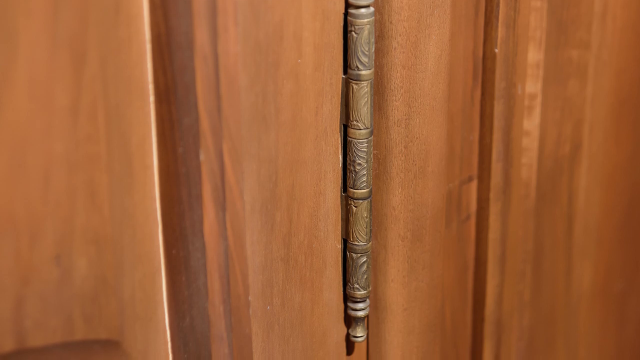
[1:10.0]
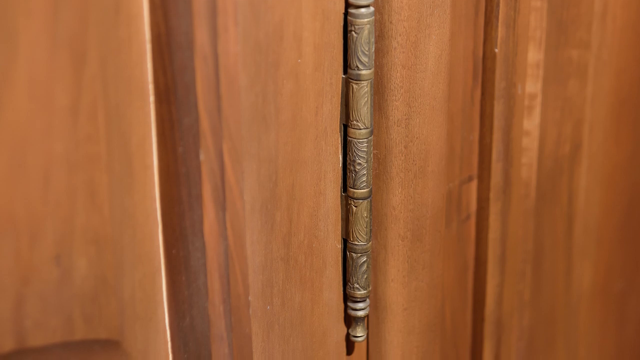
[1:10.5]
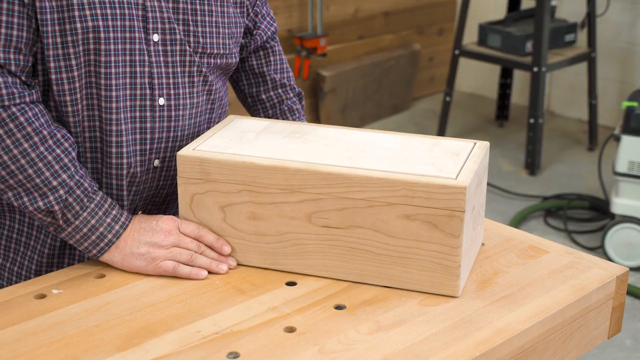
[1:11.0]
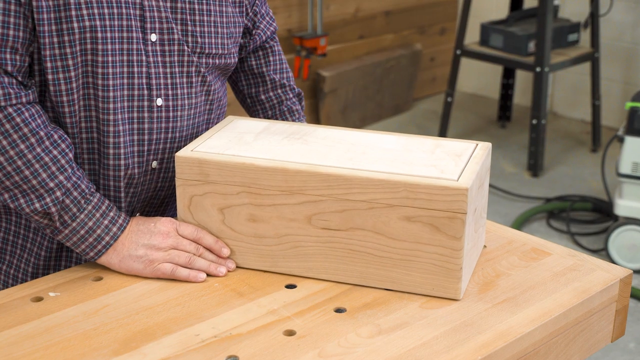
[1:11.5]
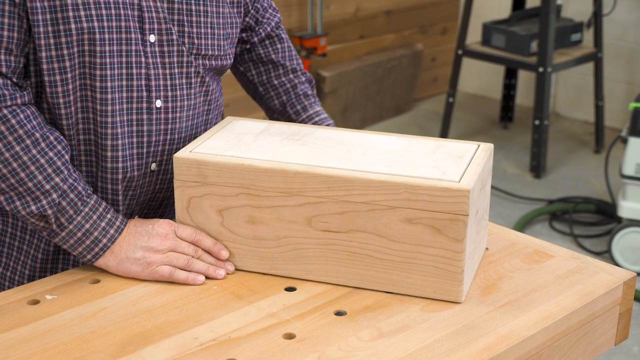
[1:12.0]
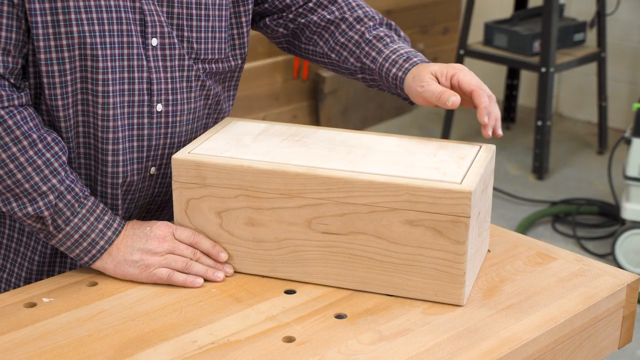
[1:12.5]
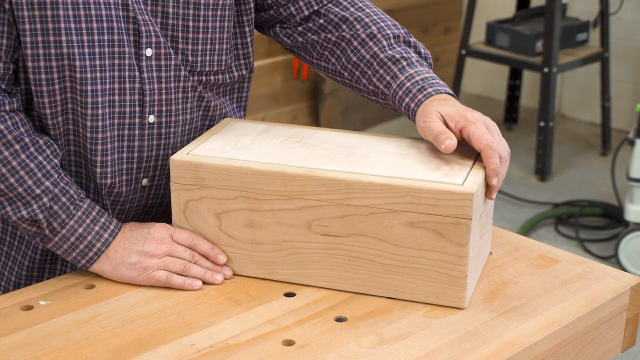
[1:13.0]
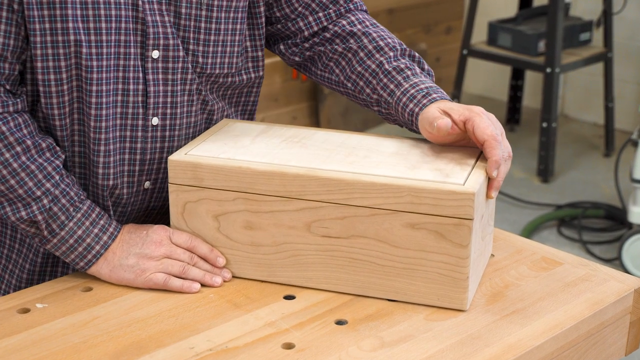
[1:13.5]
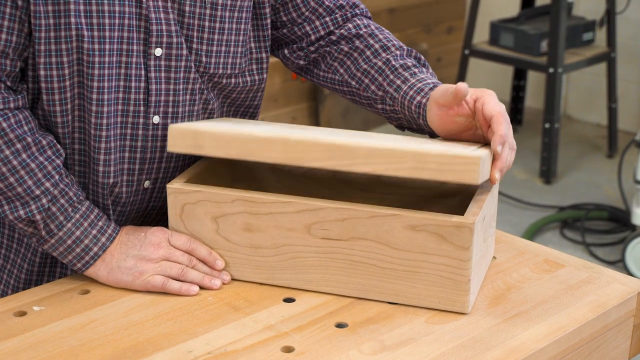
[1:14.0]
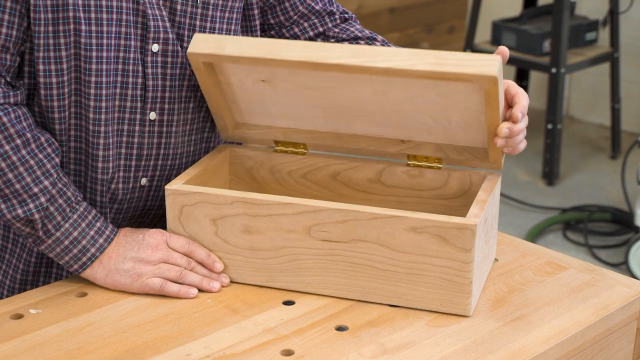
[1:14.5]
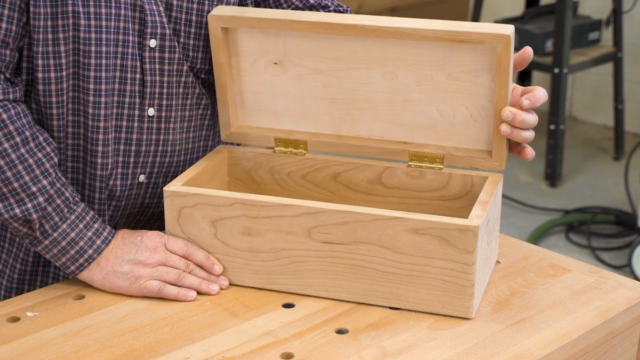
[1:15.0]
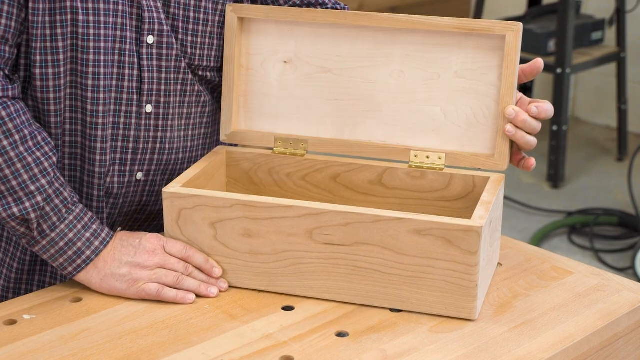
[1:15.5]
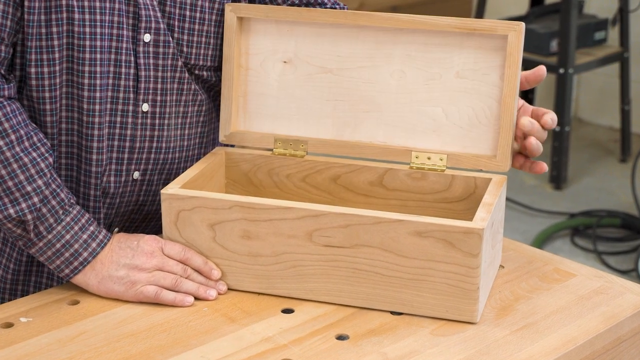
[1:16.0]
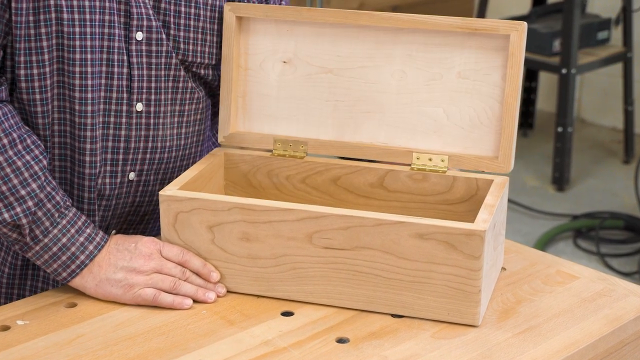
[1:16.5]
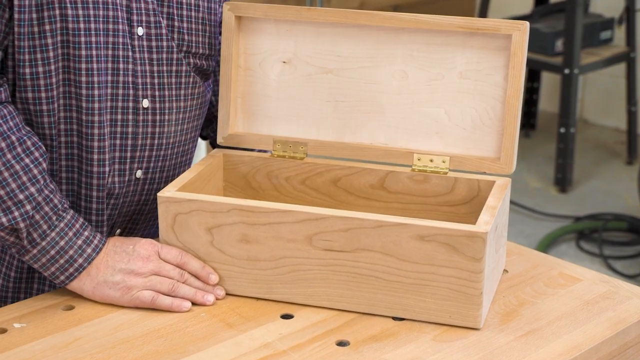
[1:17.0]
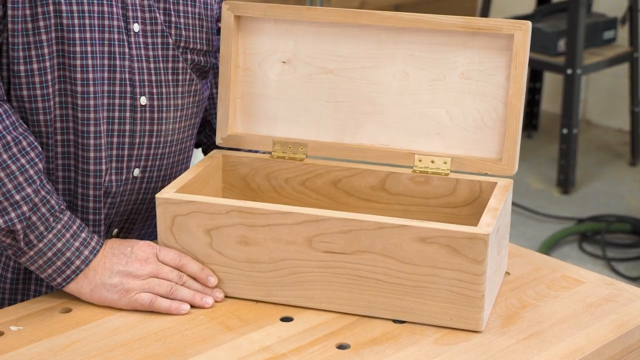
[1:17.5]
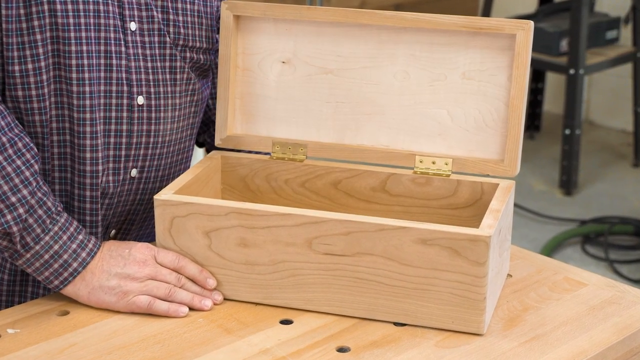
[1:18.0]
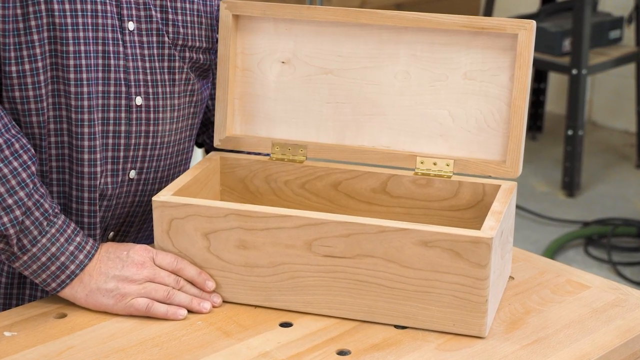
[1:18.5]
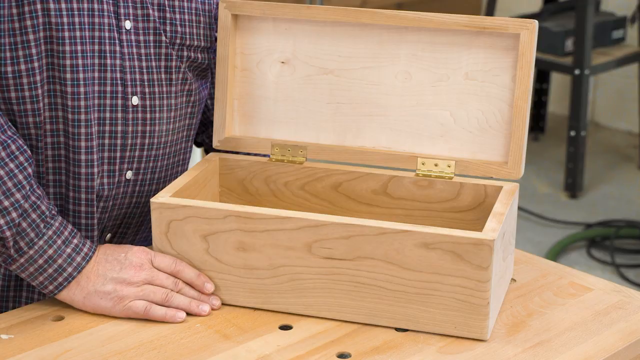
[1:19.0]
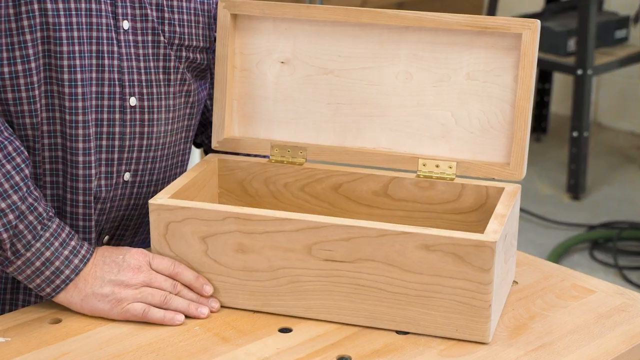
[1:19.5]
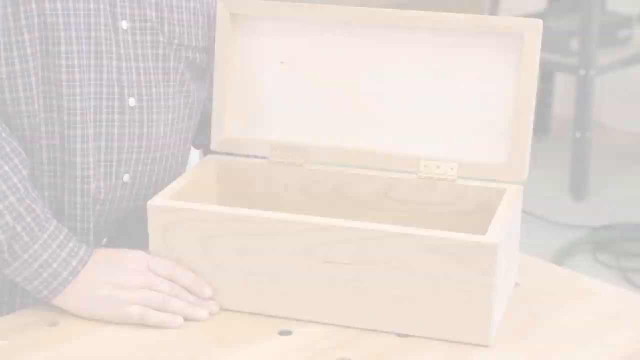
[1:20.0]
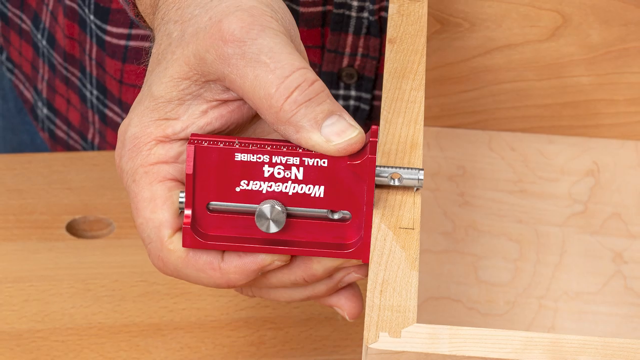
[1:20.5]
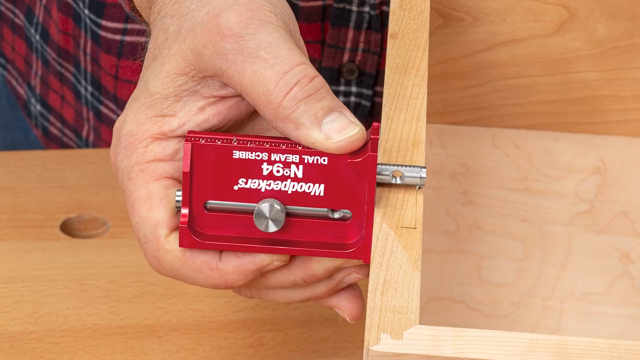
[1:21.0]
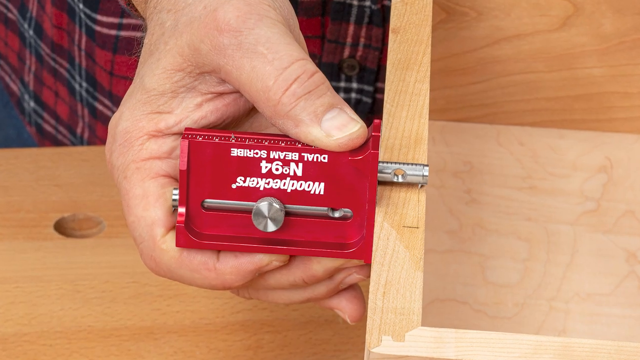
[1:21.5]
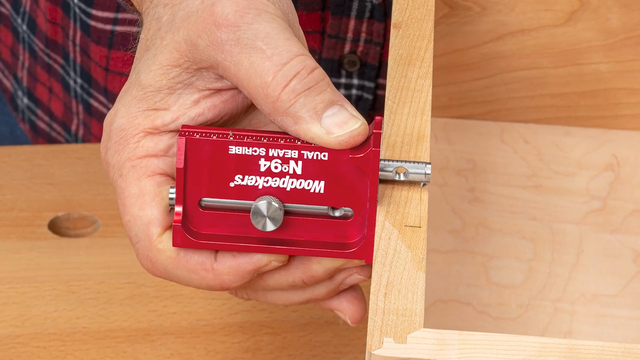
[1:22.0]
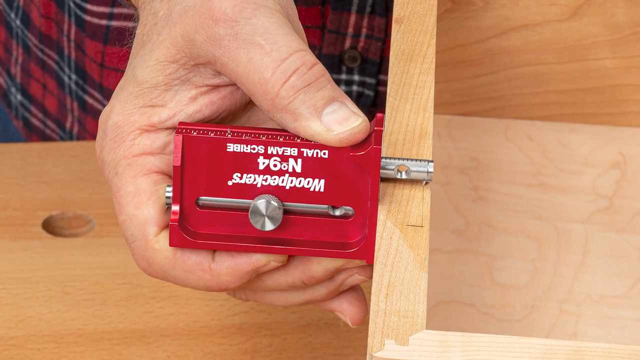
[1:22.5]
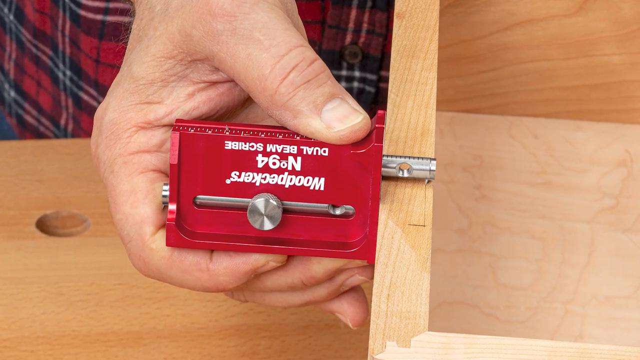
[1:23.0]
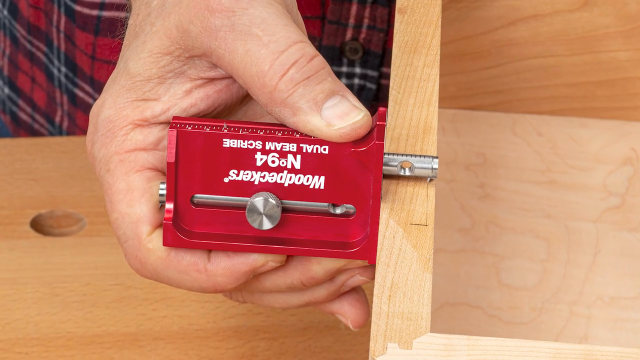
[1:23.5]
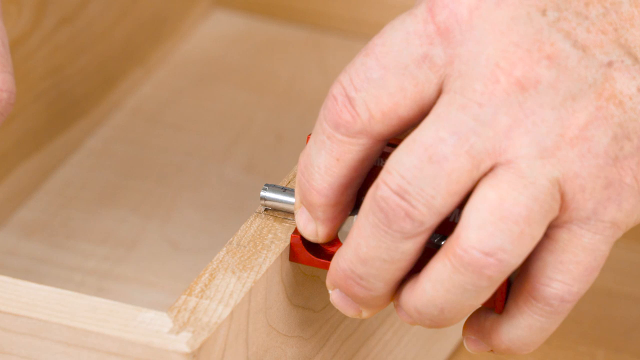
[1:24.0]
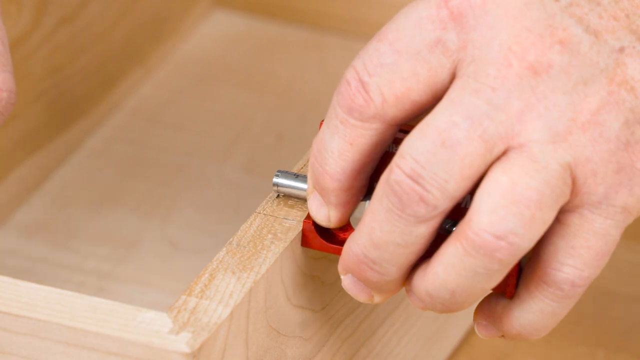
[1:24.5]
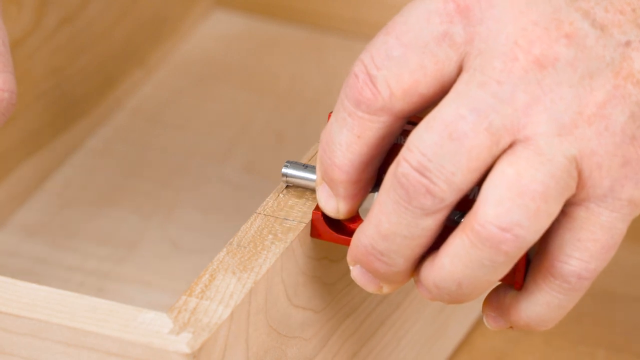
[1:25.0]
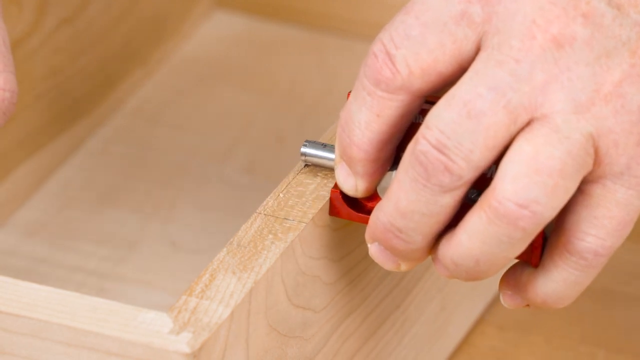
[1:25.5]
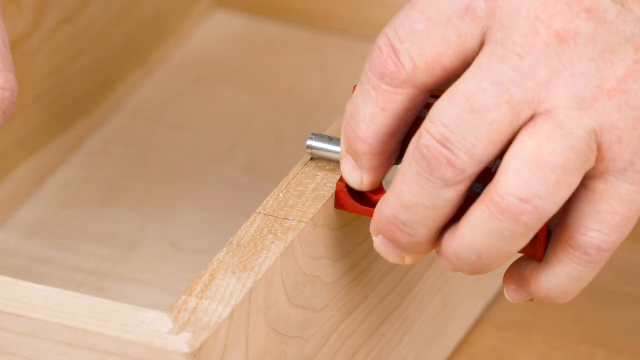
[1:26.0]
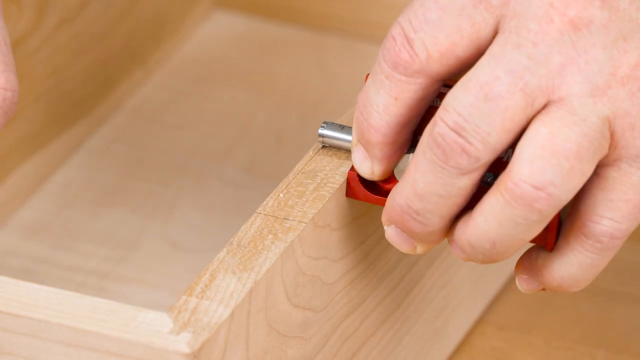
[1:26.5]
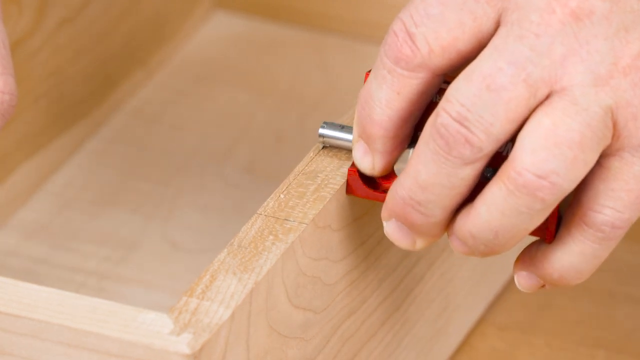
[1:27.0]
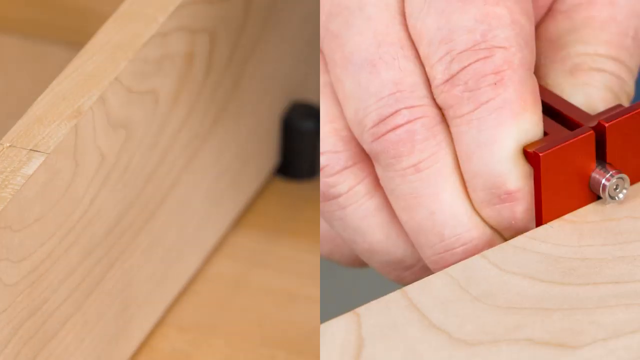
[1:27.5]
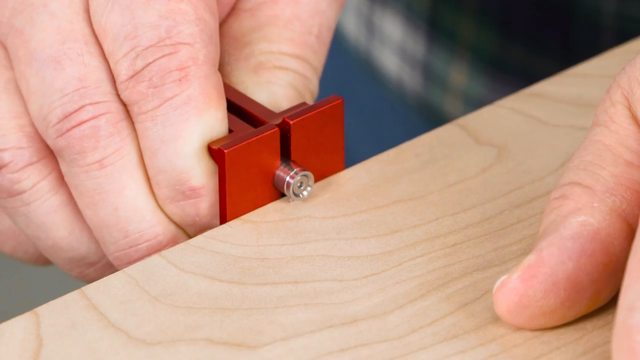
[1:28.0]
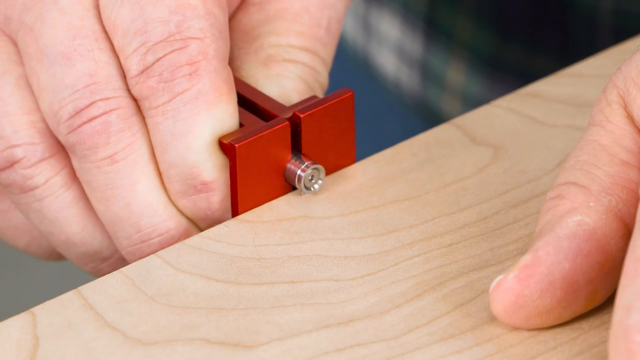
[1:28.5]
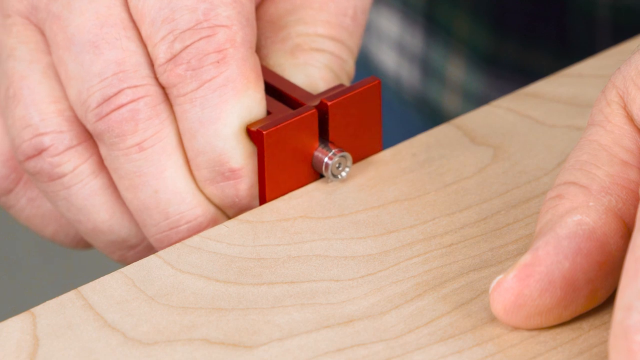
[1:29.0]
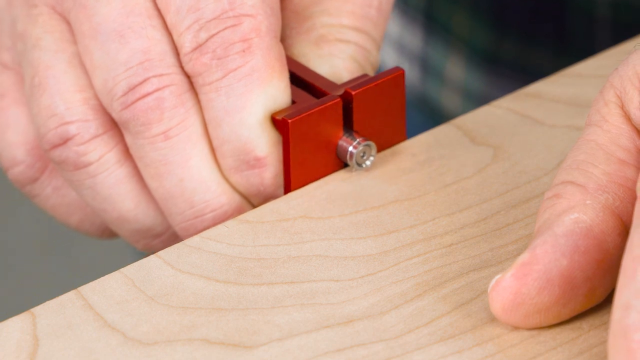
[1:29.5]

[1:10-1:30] The video is from Woodpeckers, with the text "one time tool dual beam scribe number 94". The portly man picks up the old-fashioned tool; the red one from the box says the same thing, but the old one does not say Woodpeckers. He shows a decorative hinge with carving in it. The wooden box now has a hinge on it, and the wooden lid is attached. He shows the dual beam scribe extended: he pushes a little button, which makes a stem-like part pop out, measures some of the wood with it, and scratches the wood a little, possibly where the hinge will go.